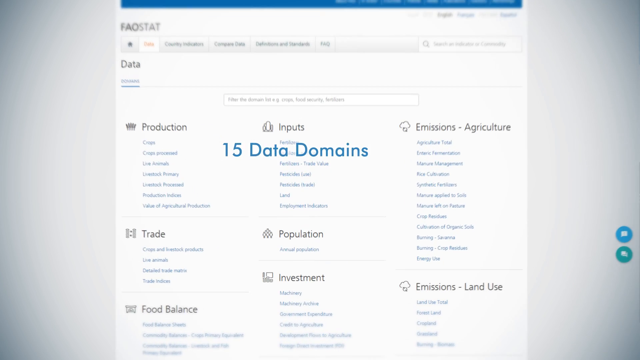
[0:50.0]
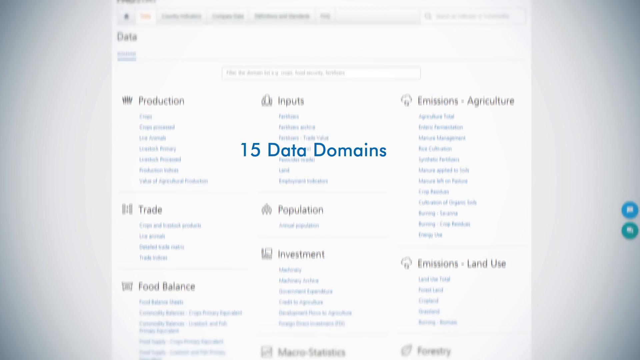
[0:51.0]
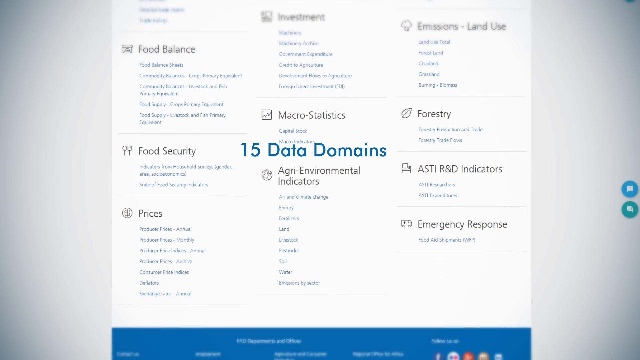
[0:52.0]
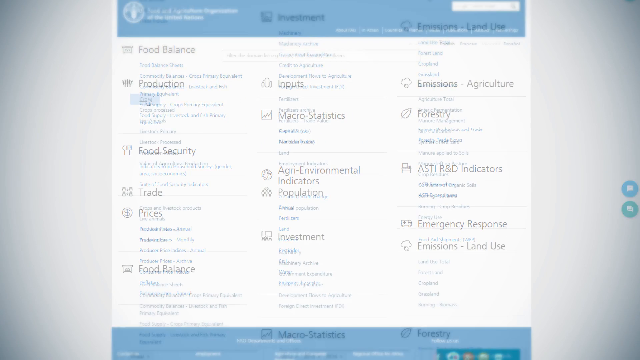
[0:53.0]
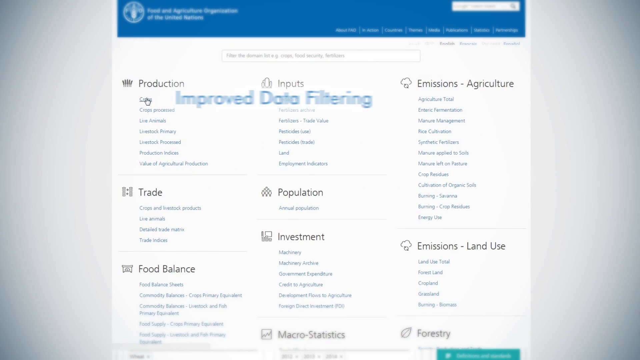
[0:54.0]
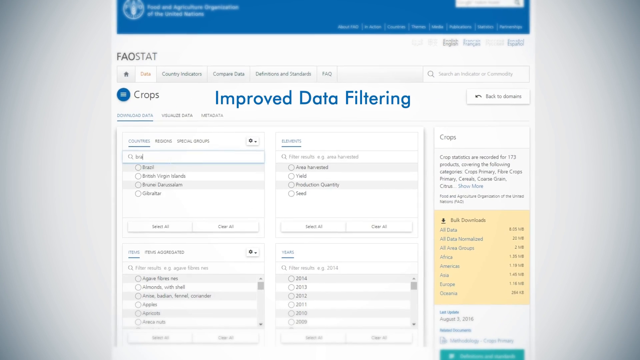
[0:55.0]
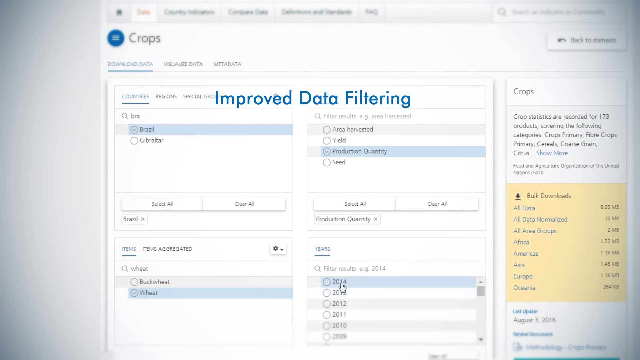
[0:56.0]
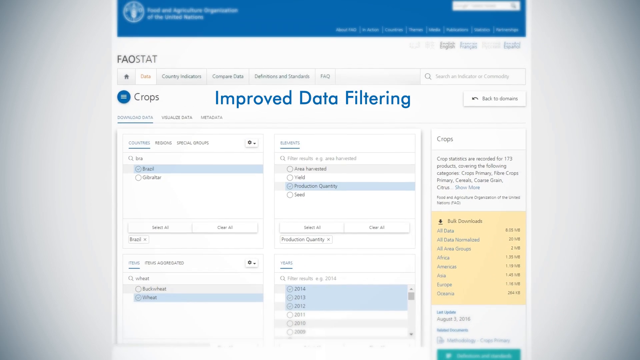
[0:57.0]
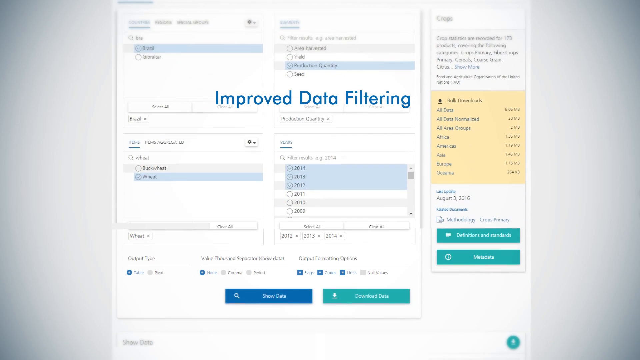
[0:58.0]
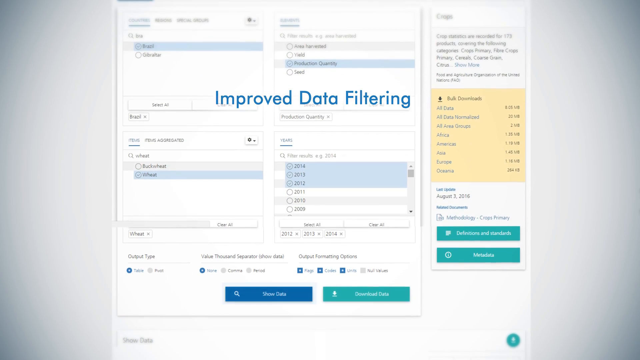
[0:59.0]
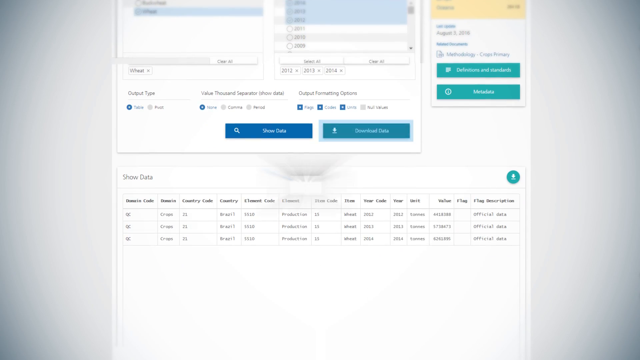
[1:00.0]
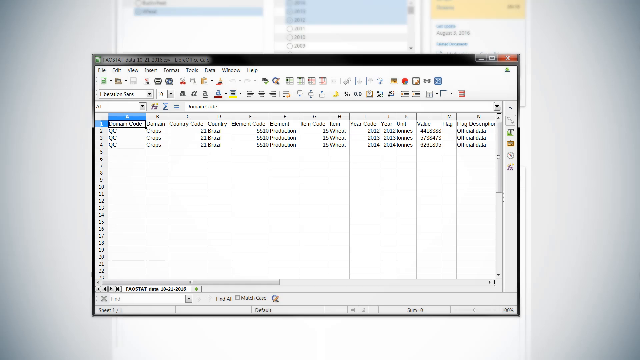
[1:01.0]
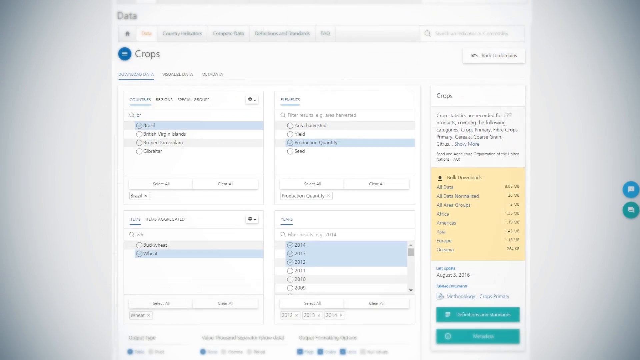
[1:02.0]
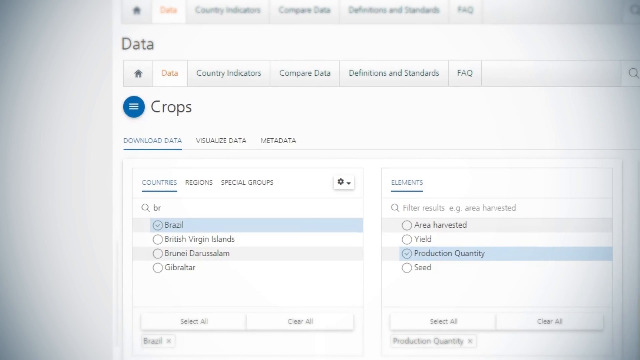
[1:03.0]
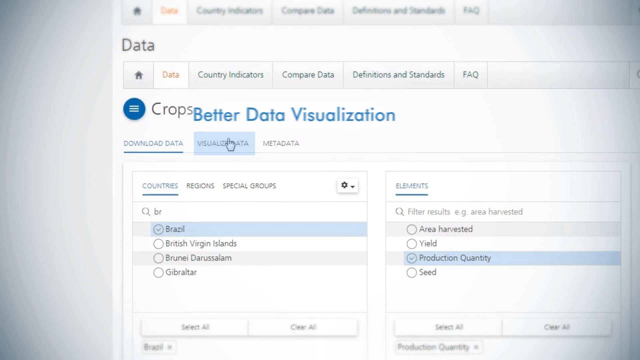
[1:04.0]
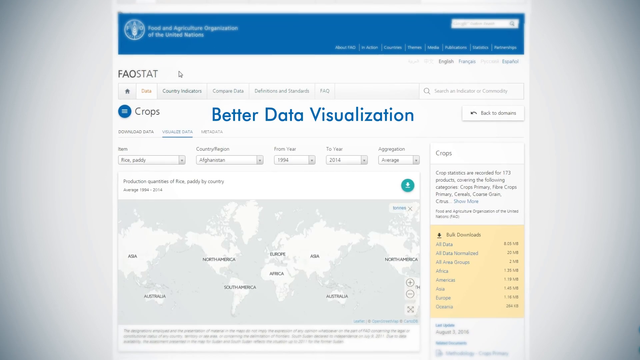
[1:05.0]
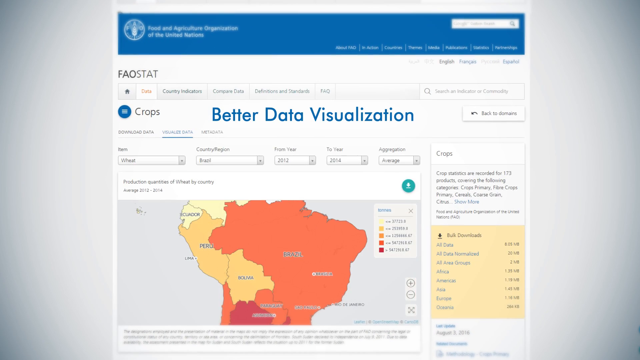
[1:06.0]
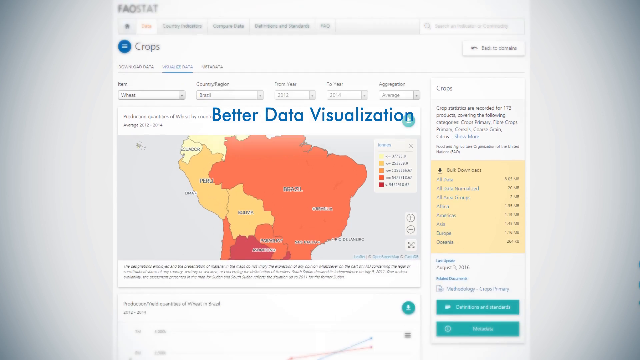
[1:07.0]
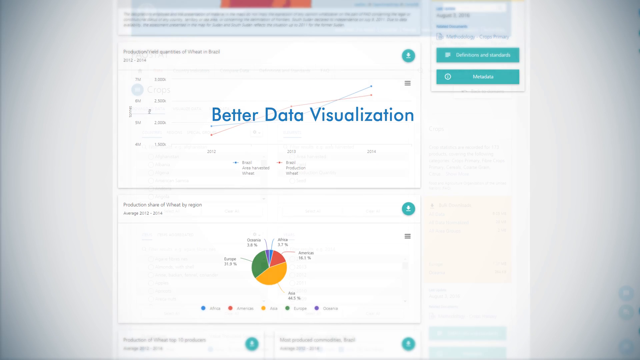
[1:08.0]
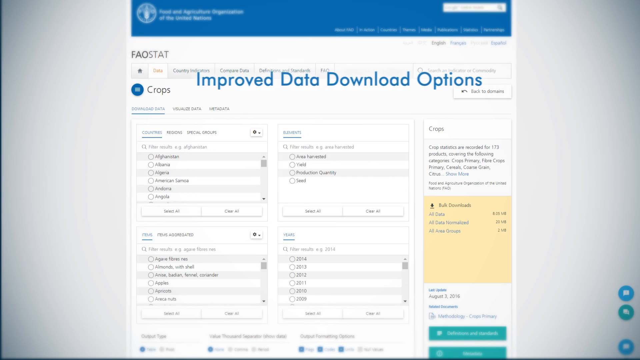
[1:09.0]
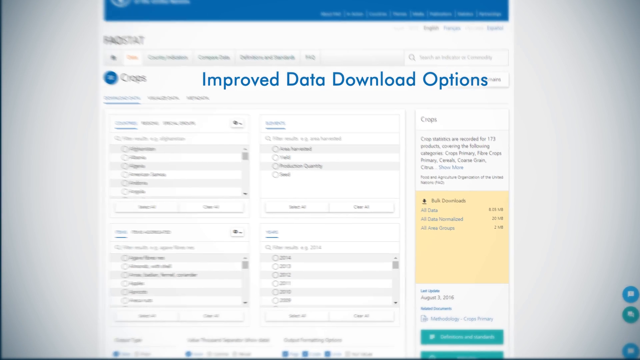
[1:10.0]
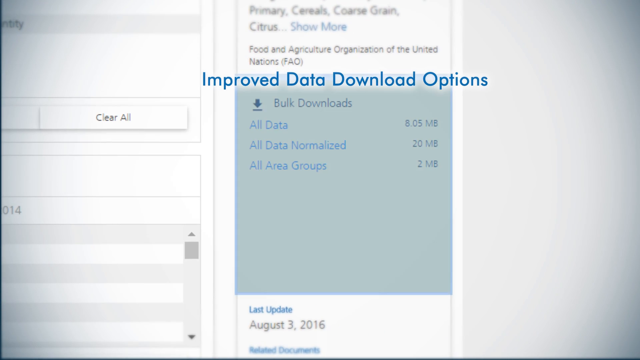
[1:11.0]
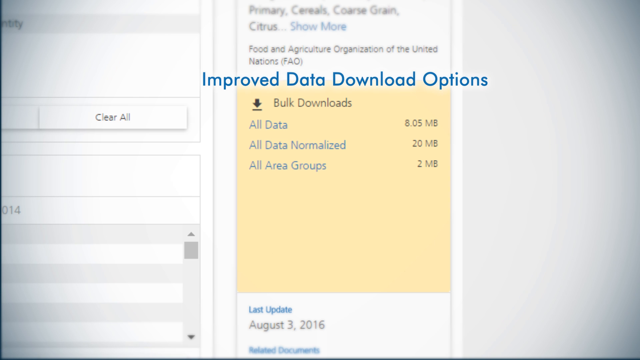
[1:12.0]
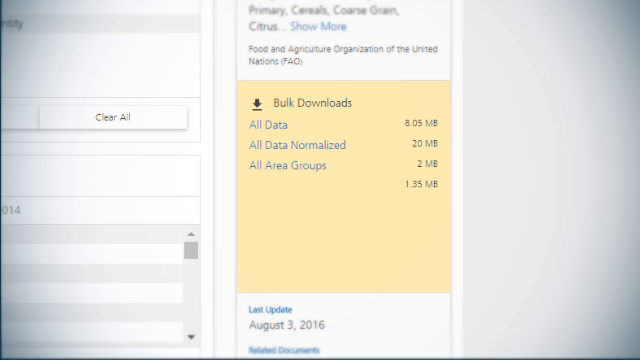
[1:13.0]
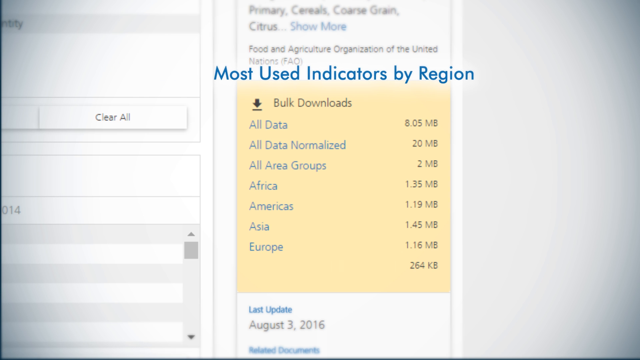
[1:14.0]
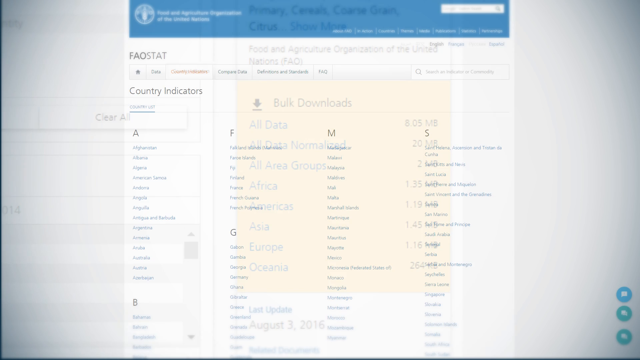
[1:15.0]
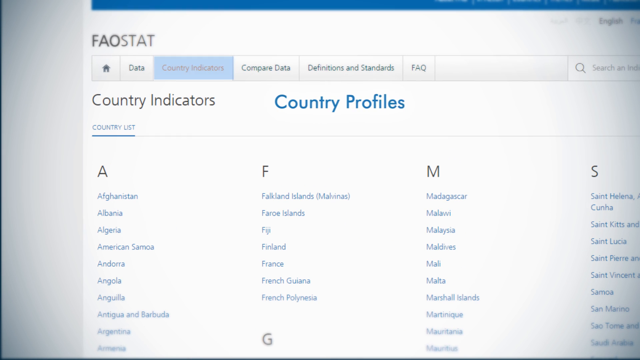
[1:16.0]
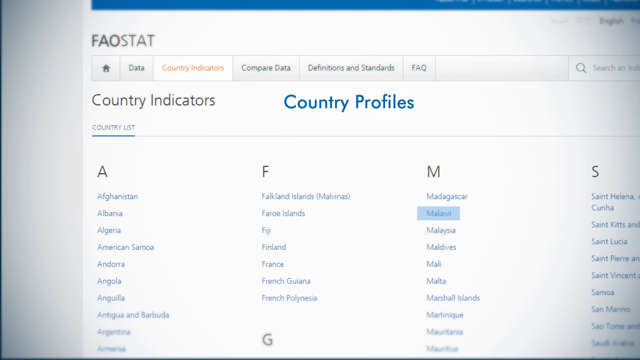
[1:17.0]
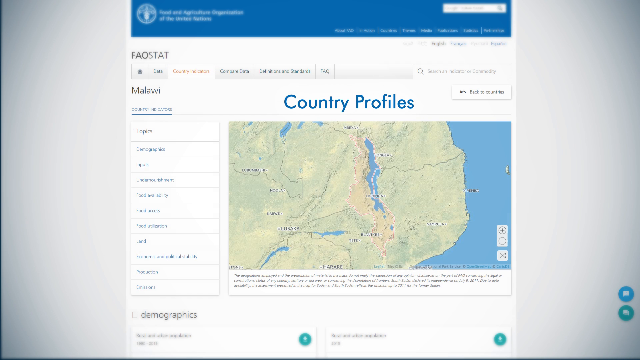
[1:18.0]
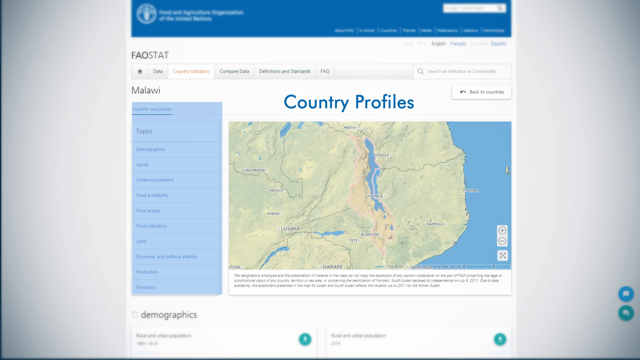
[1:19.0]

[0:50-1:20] Text lists "15 data domains," "improved data filtering," diagrams, "better data visualization," "improved data download options," "most used indicators by region" and "country profiles." Data categories are shown, including production, inputs, emissions, agriculture, trade, population, investment, land use, food security, forestry, R&D, indicators, emergency response, environmental indicators, food security crisis and crops. Stat sheets appear, along with a visualization that shows the countries, color coordinated based on the food data. Different filtering options are shown.